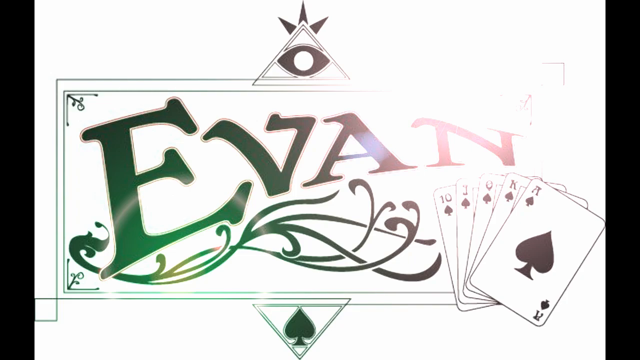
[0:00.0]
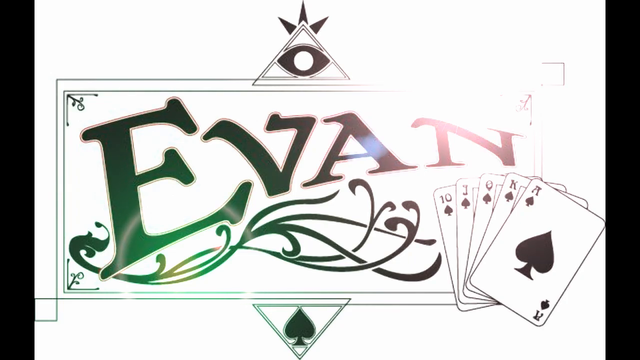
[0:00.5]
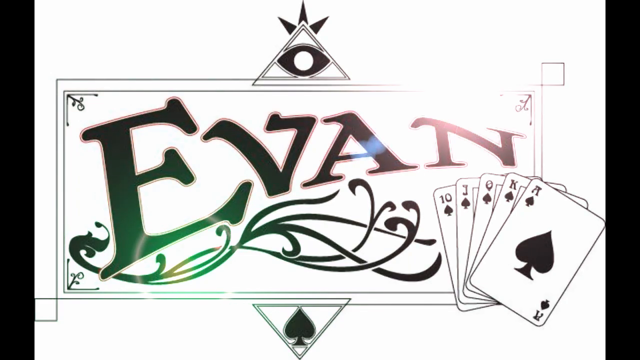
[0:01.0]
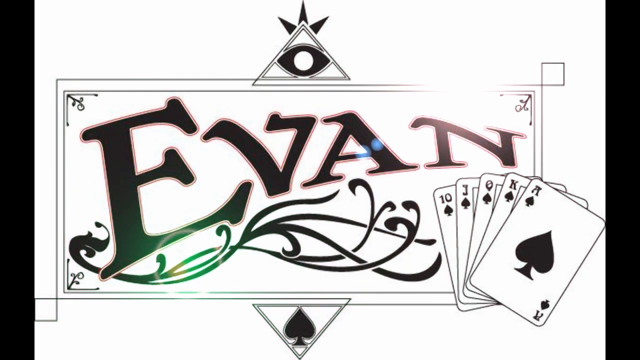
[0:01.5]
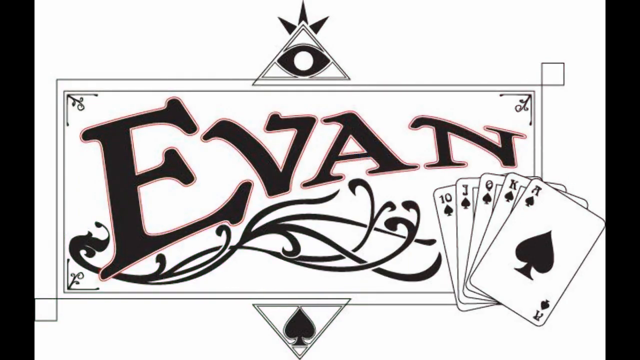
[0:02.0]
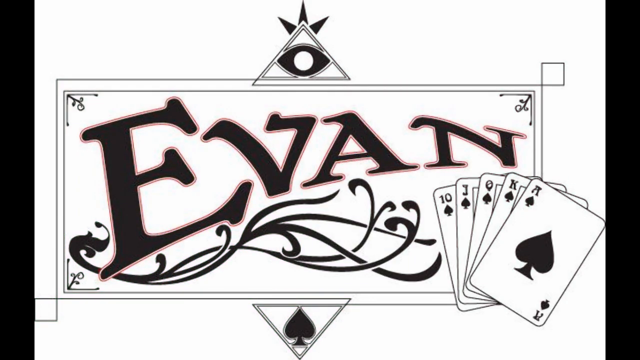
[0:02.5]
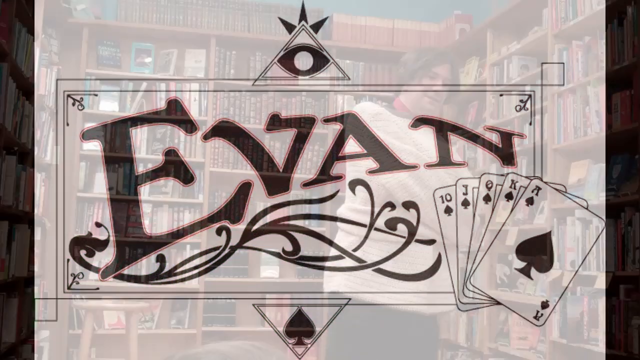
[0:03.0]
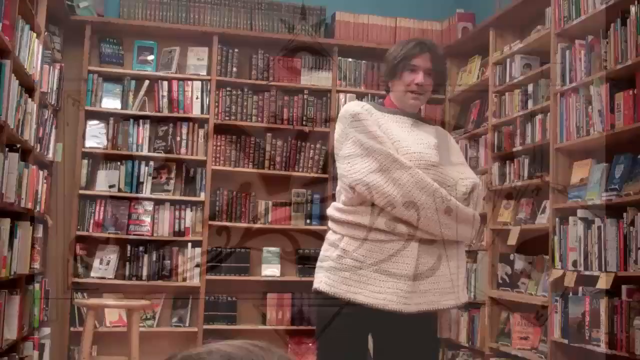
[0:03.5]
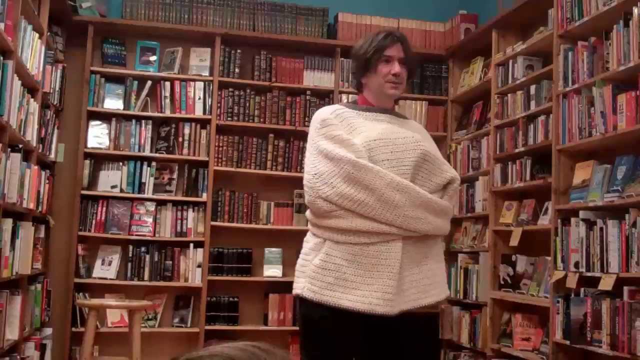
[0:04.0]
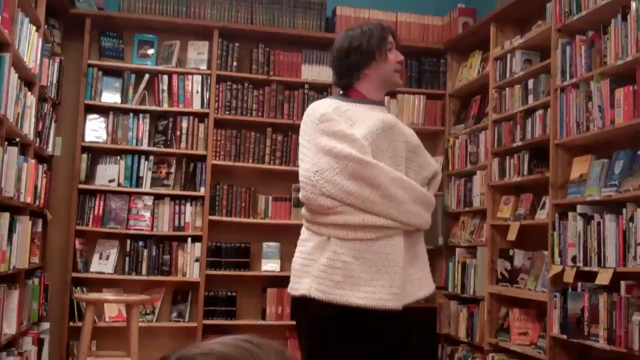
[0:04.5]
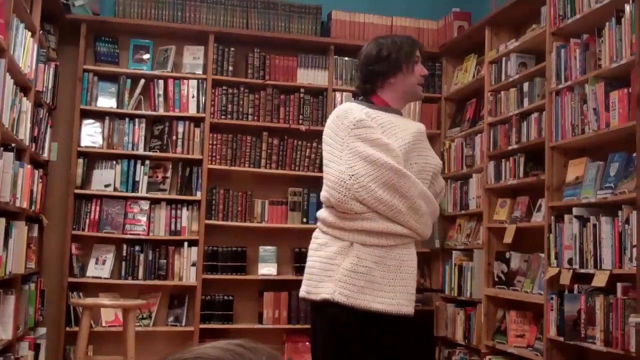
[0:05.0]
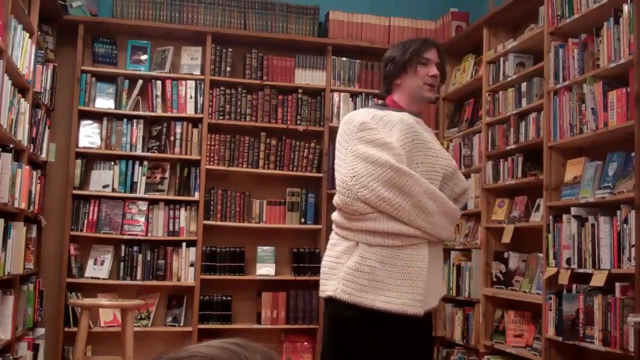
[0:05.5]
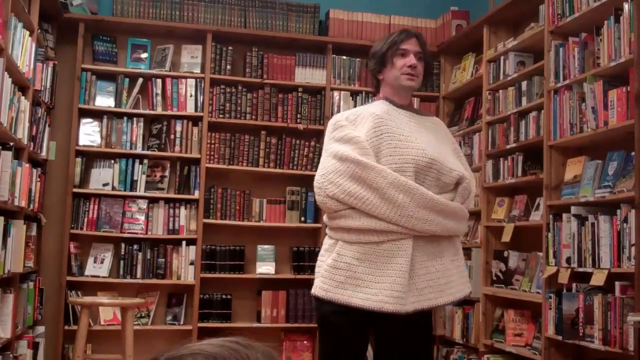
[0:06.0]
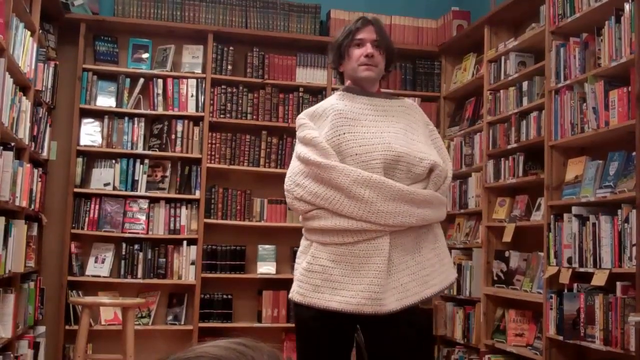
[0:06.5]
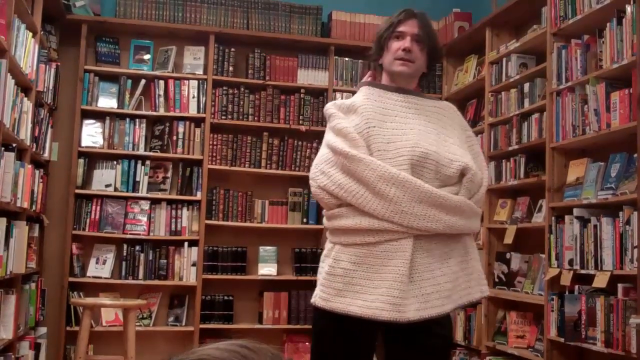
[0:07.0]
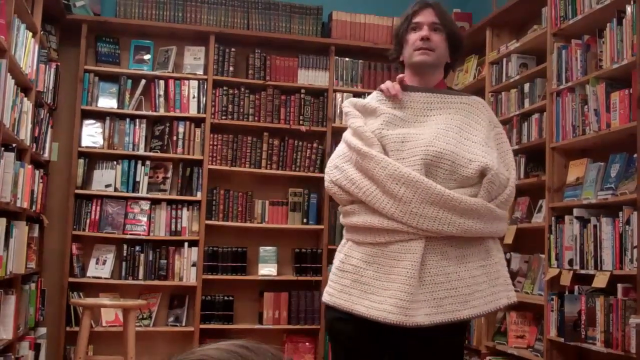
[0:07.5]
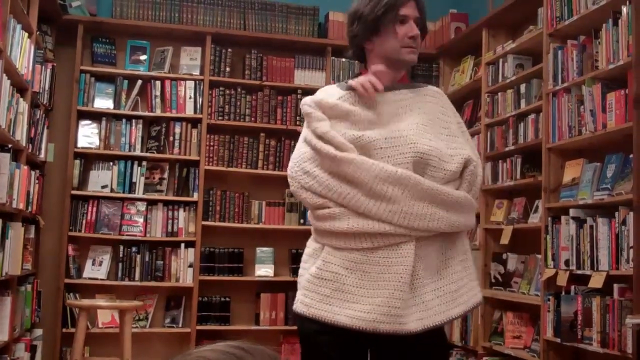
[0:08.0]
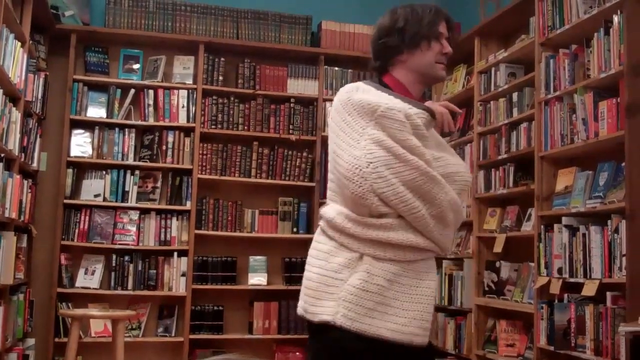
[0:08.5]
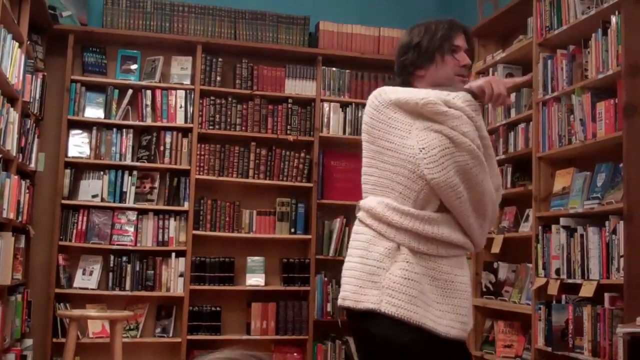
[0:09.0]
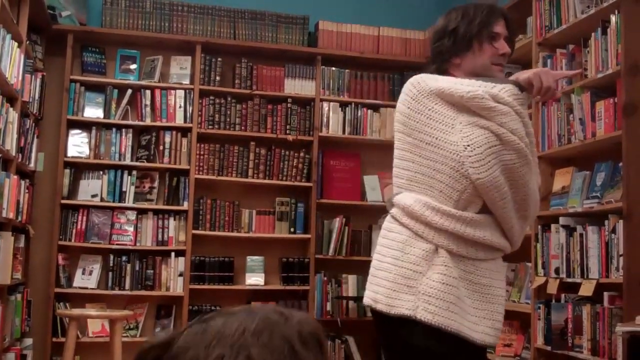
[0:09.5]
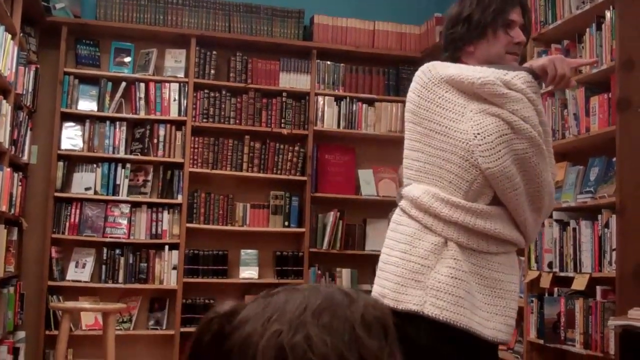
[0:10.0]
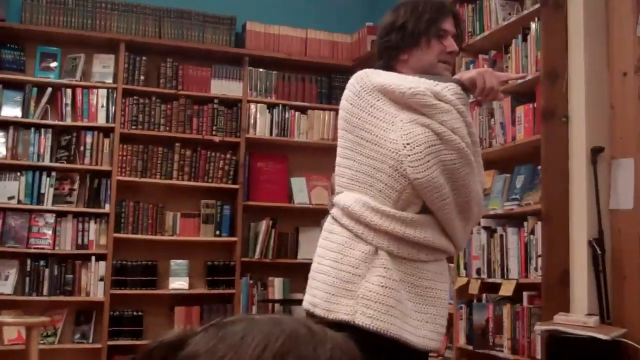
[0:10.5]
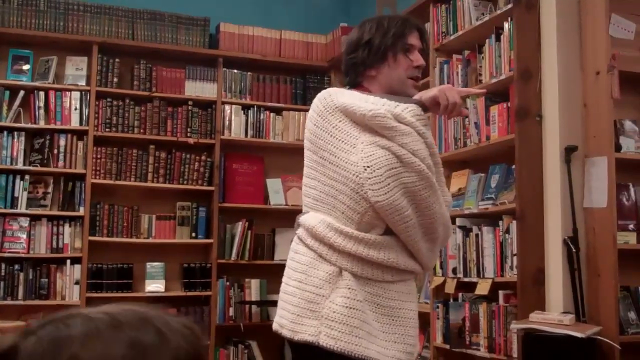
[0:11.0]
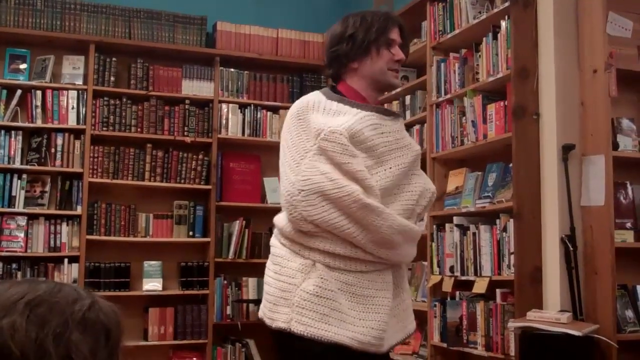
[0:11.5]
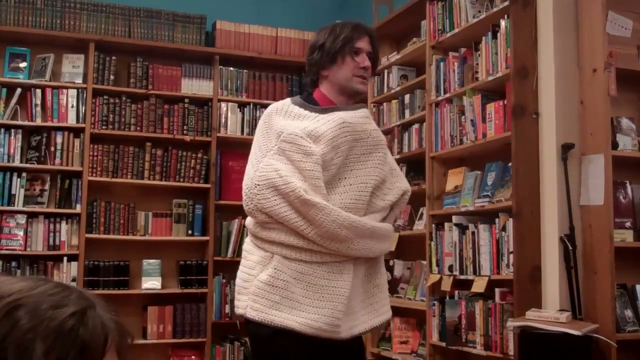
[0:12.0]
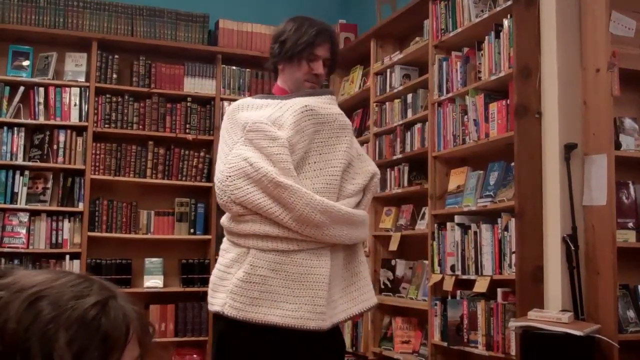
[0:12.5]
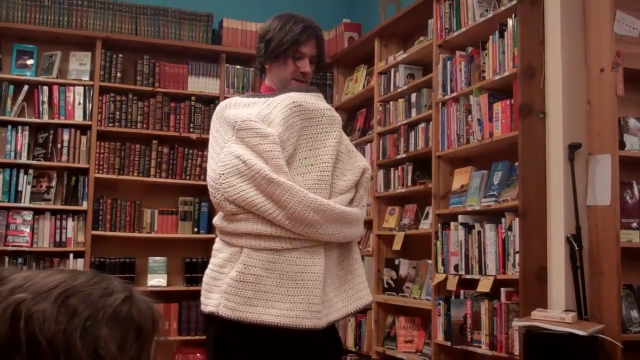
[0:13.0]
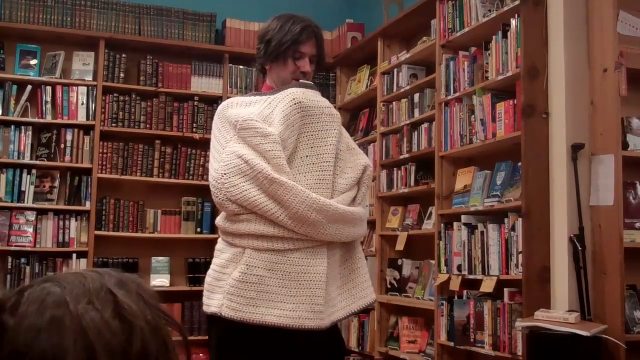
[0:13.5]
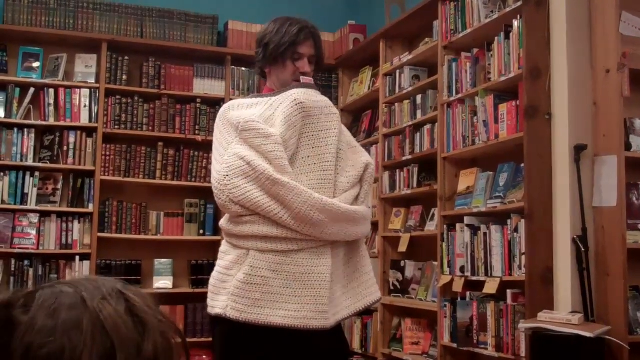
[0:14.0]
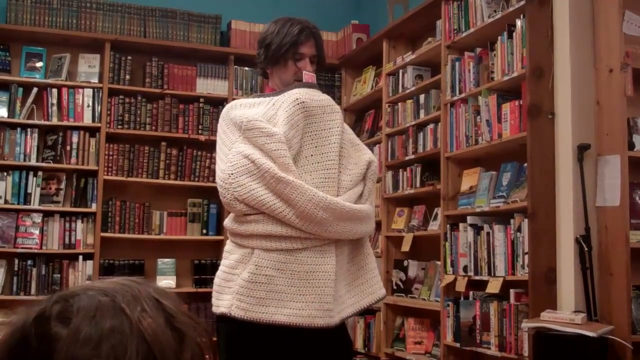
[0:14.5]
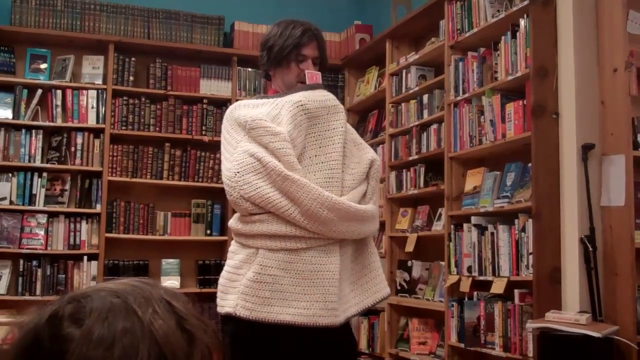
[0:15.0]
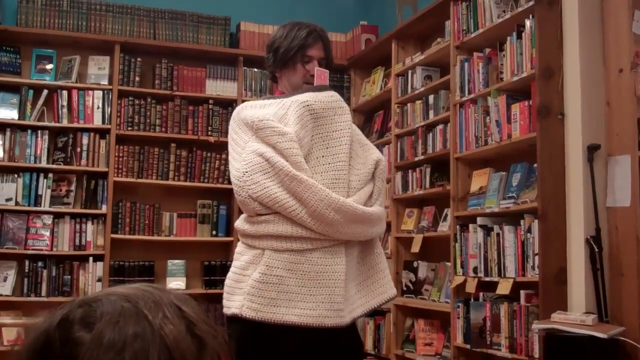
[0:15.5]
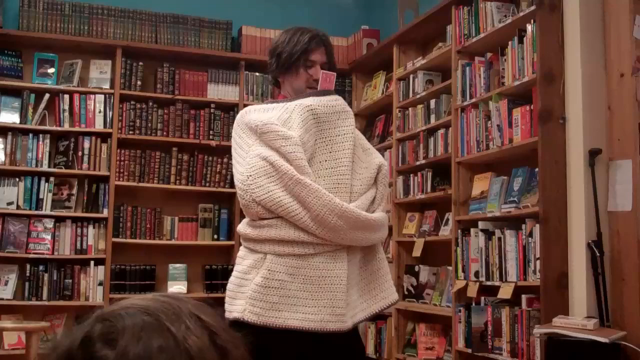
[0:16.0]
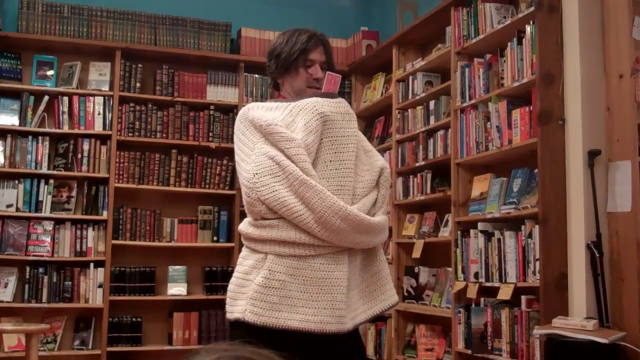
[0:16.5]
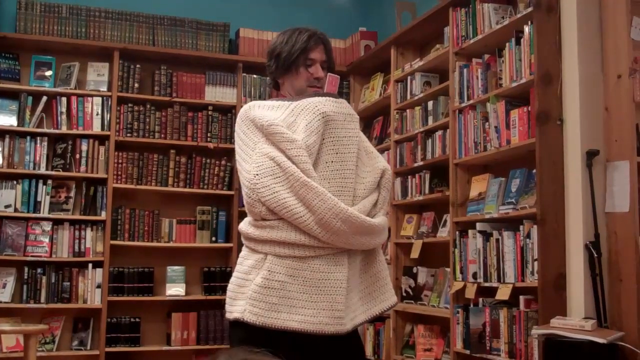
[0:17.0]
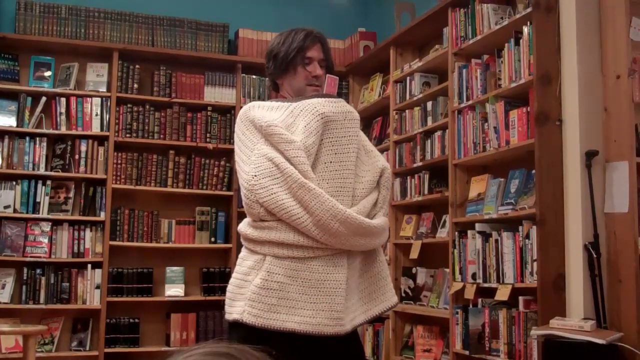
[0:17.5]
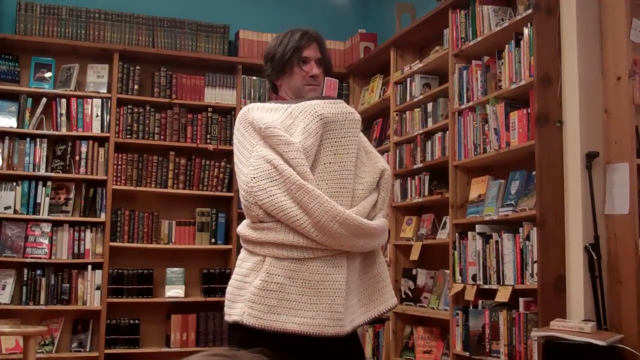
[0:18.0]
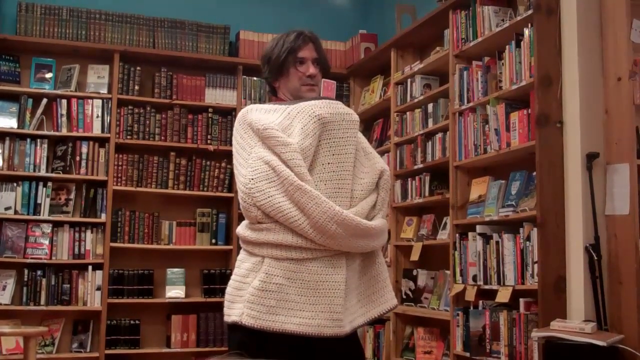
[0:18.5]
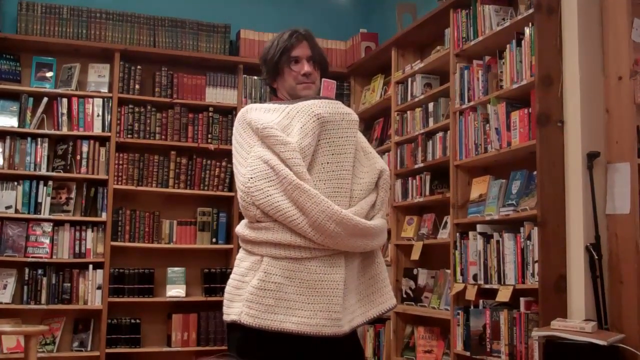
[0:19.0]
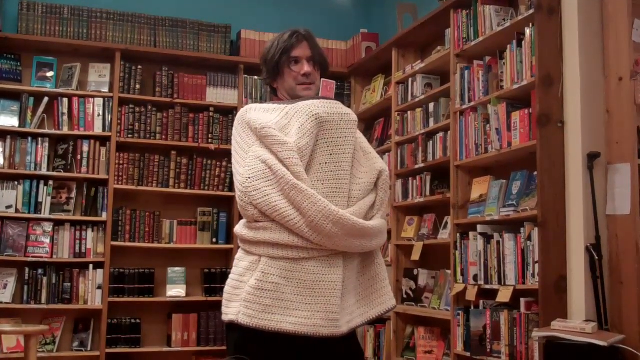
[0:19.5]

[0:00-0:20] The screen opens with the text "Evan" (spelled E-V-A-N), with a swirly design underneath it and a pack of playing cards with various designs on them. The scene zooms out to a man wearing a straitjacket in a bookstore or somewhere with a lot of books. His hands poke out of the top of the straitjacket, showing that he is not actually sealed within it. He holds a card up to his face with his hands inside the straitjacket and is saying something. He is presumably Evan and seems to be doing some sort of card trick as some sort of magician. The top of a head appears to be visible, suggesting there is some sort of audience.